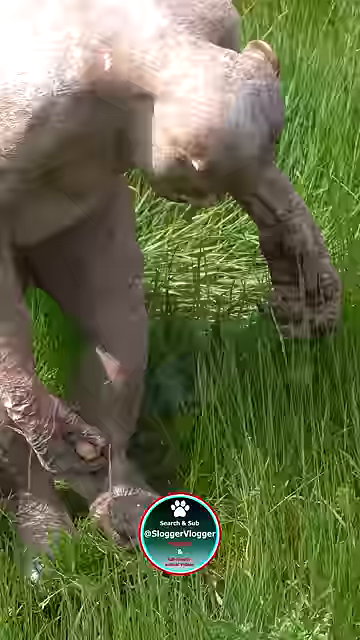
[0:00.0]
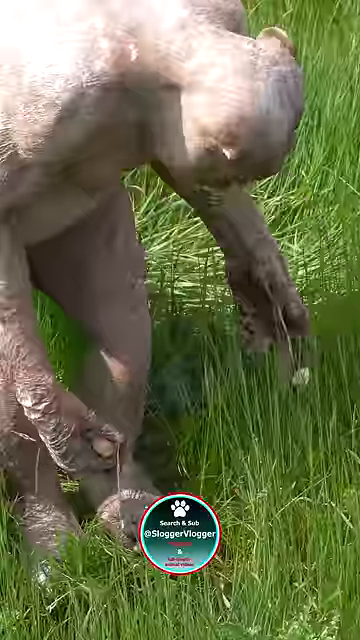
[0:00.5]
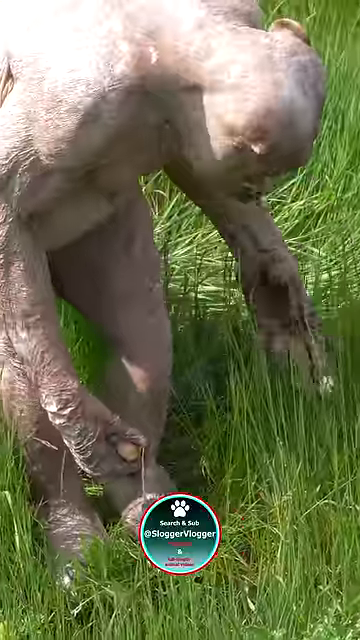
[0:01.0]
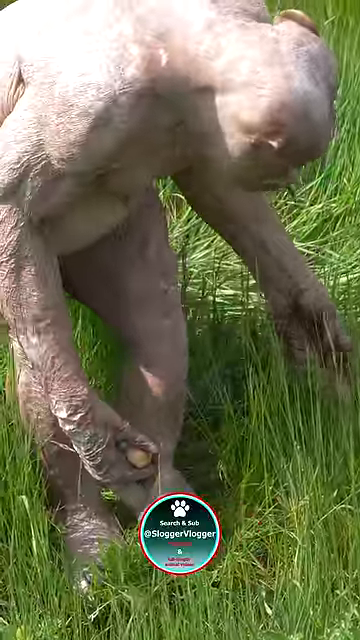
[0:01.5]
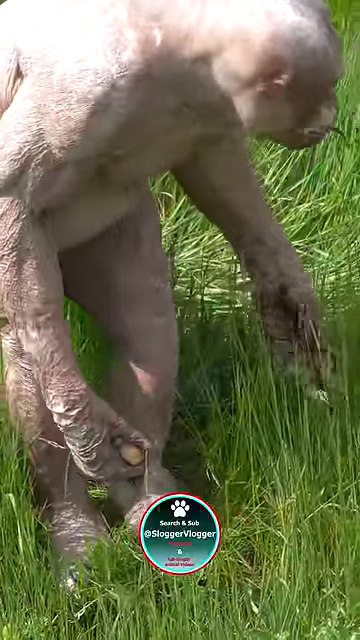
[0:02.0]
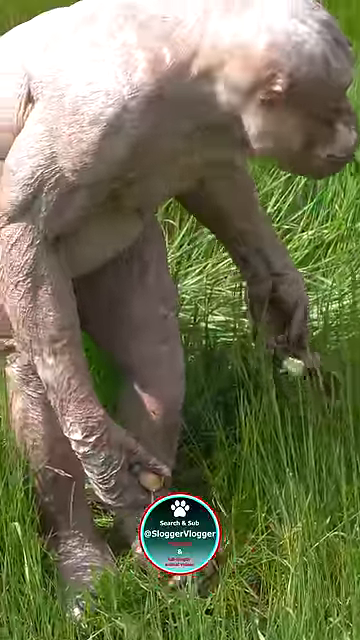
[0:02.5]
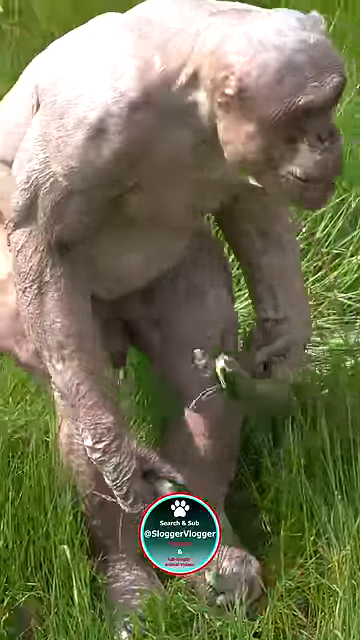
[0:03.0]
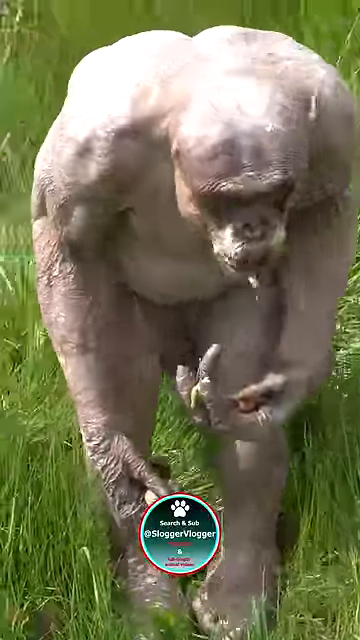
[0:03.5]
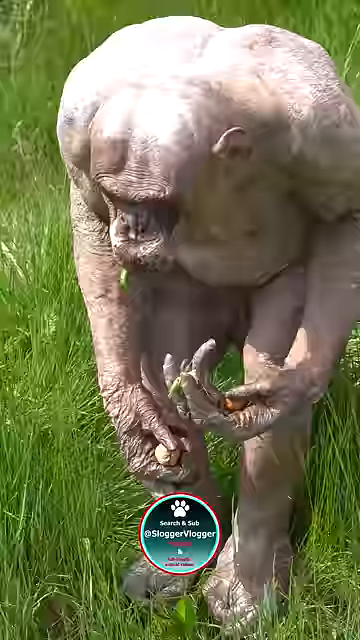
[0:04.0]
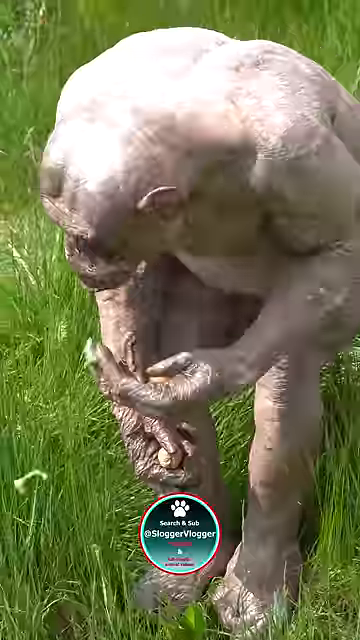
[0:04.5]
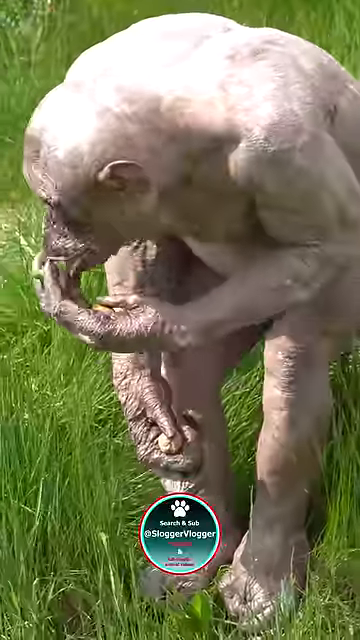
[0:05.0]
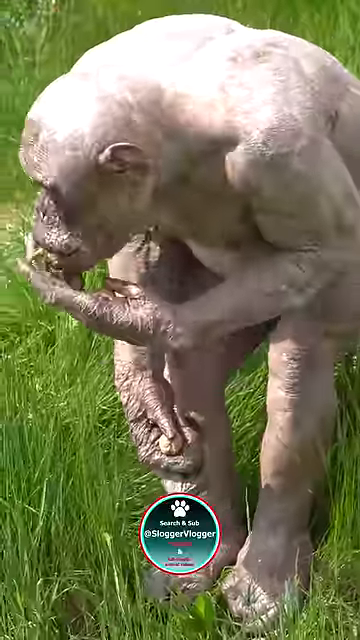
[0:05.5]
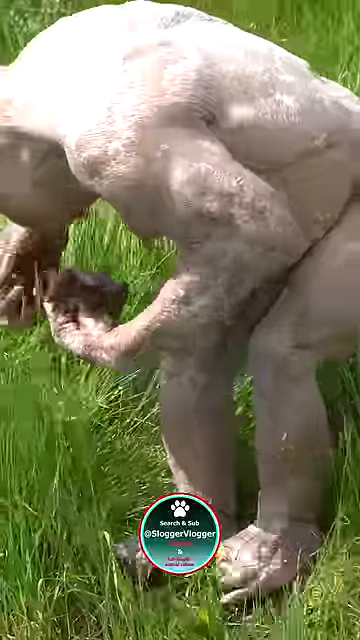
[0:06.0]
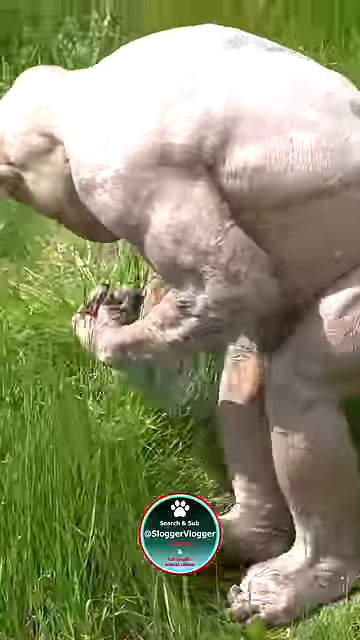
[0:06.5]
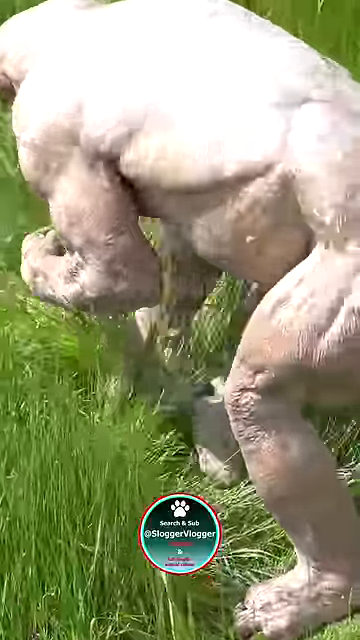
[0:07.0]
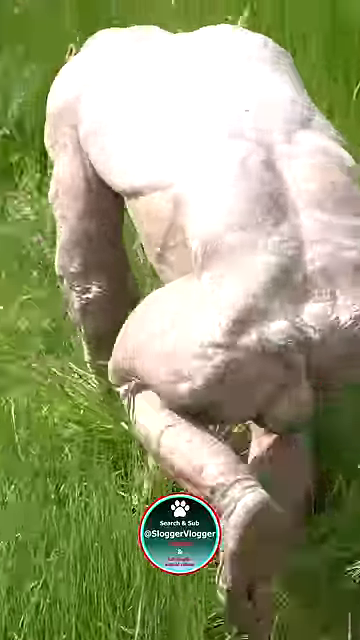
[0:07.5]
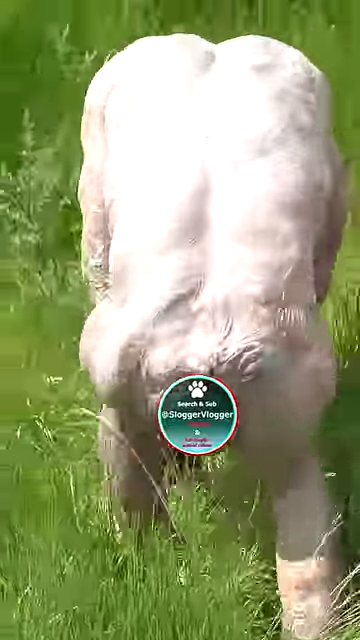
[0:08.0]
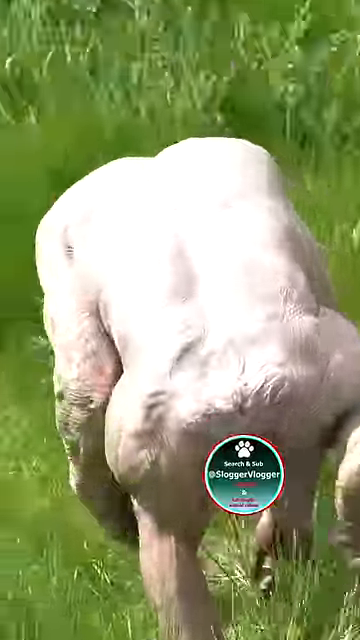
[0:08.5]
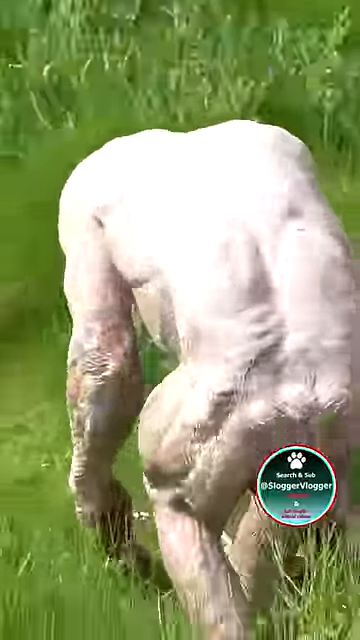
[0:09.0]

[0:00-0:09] A large ape grazes in some high grasslands, eating different grasses and other things he finds on the ground. A round badge called Sloggy Vlogger is in the middle, used to censor the ape's butt as he walks around. The ape seems to be quite old: he has lots of gray hair and no hair on his head, and he looks to be a much older primate, though he is still very muscular. He is enjoying himself eating whatever he finds on the ground.